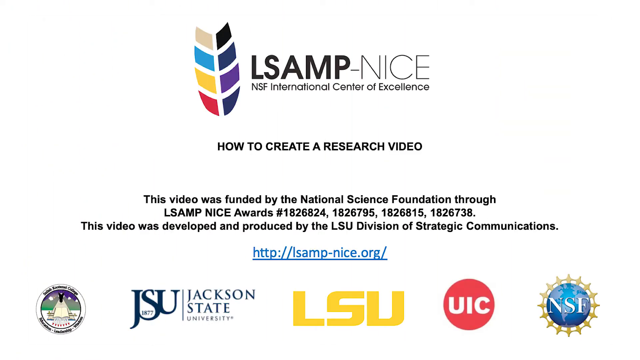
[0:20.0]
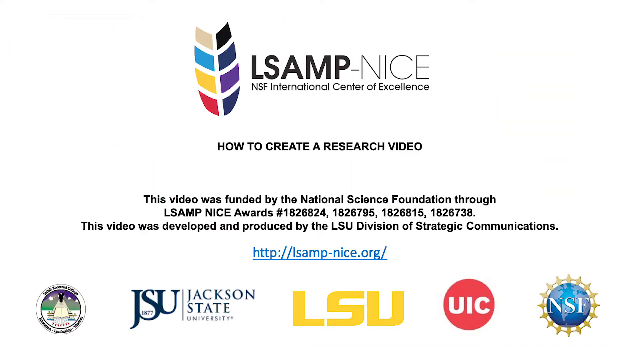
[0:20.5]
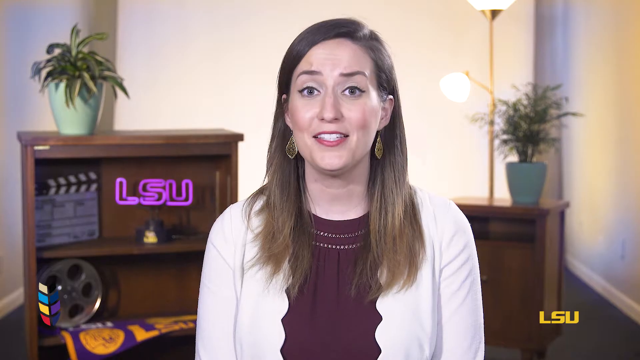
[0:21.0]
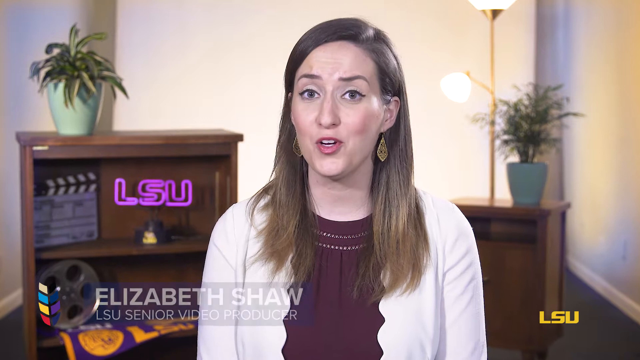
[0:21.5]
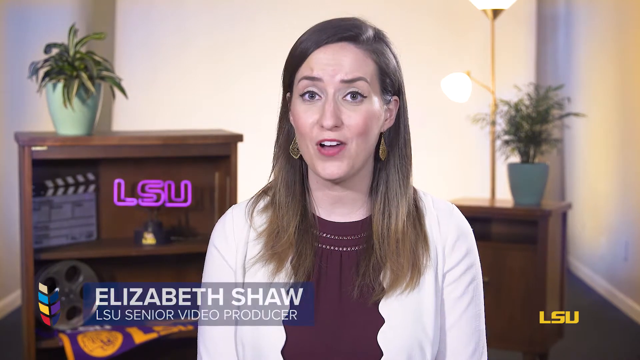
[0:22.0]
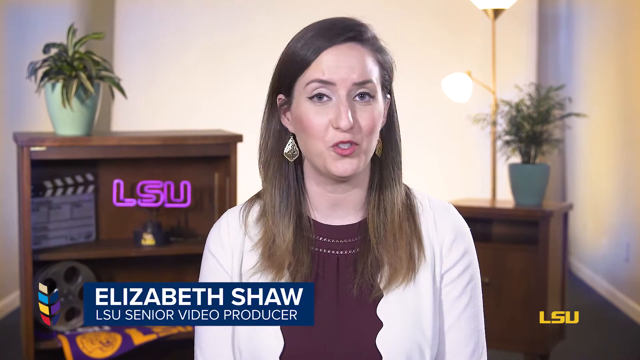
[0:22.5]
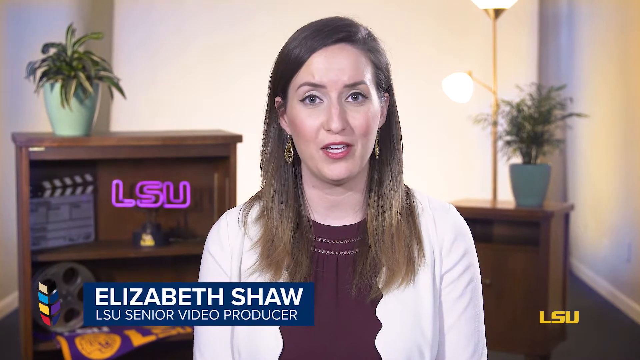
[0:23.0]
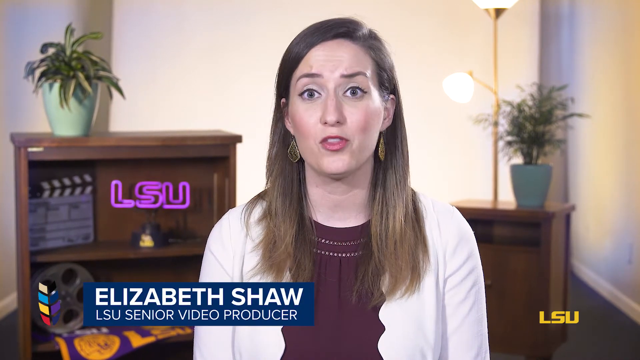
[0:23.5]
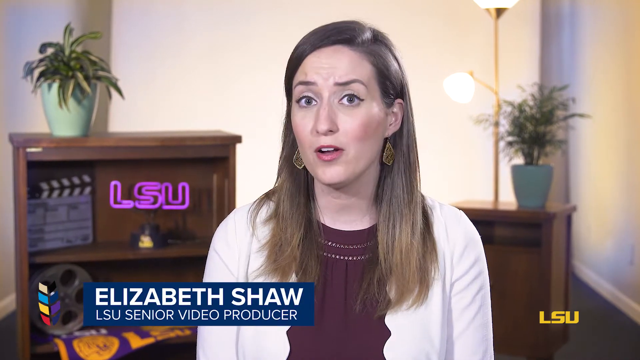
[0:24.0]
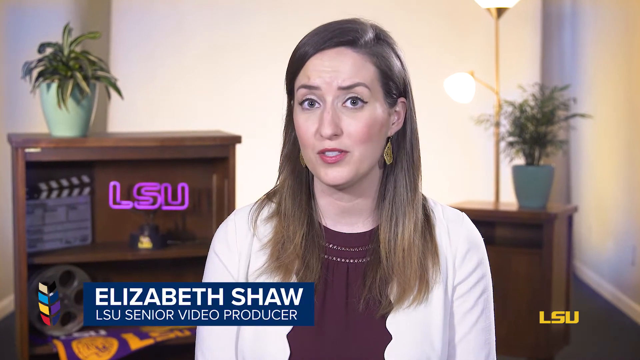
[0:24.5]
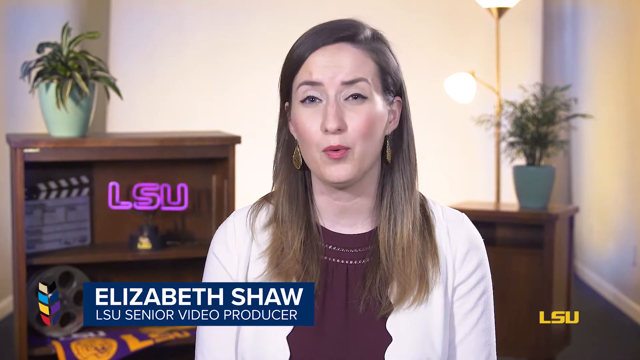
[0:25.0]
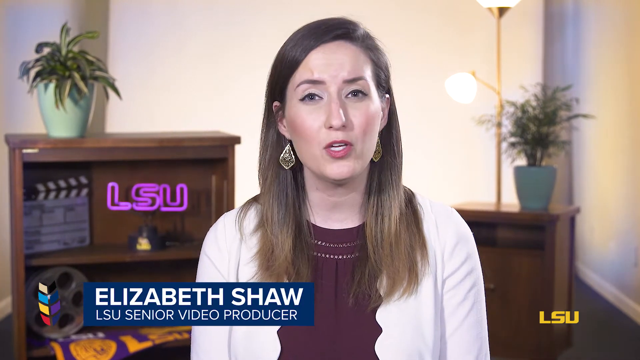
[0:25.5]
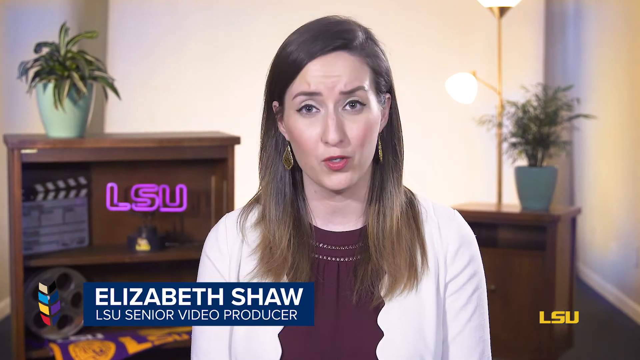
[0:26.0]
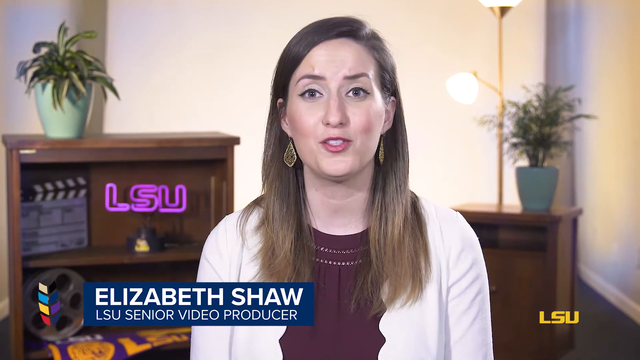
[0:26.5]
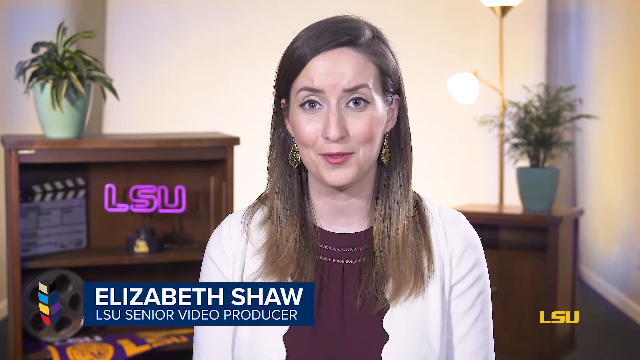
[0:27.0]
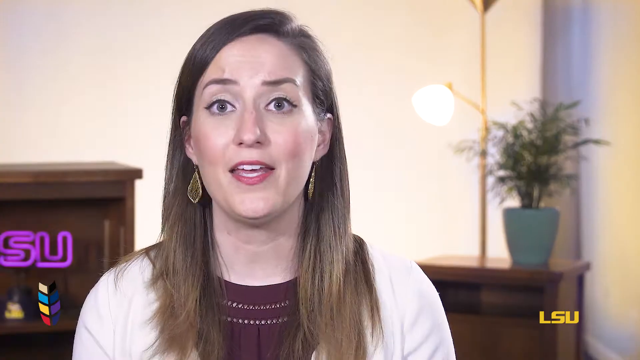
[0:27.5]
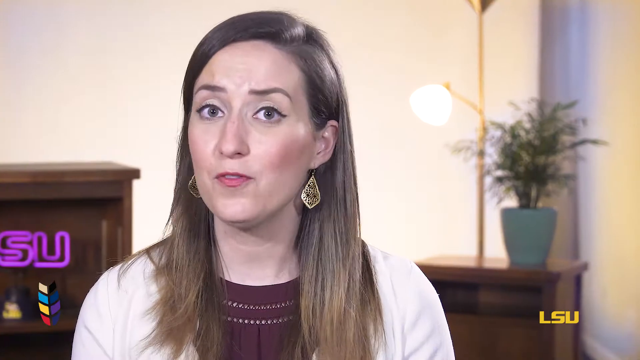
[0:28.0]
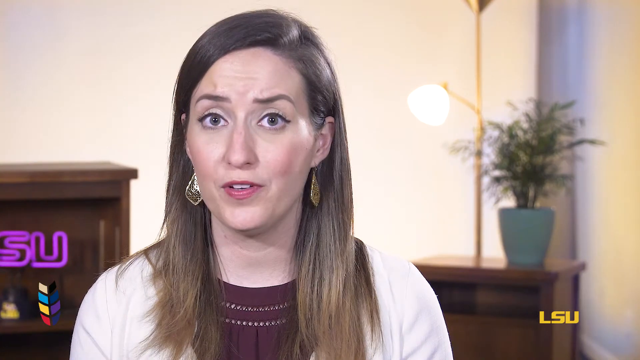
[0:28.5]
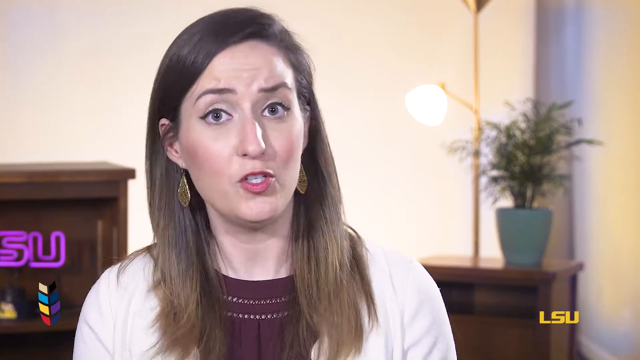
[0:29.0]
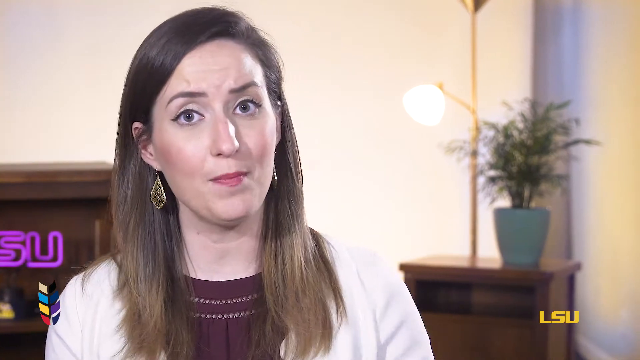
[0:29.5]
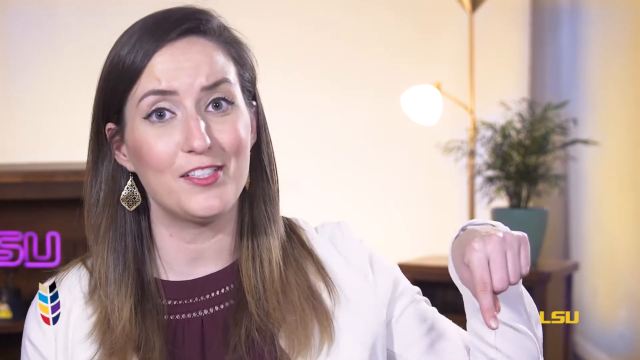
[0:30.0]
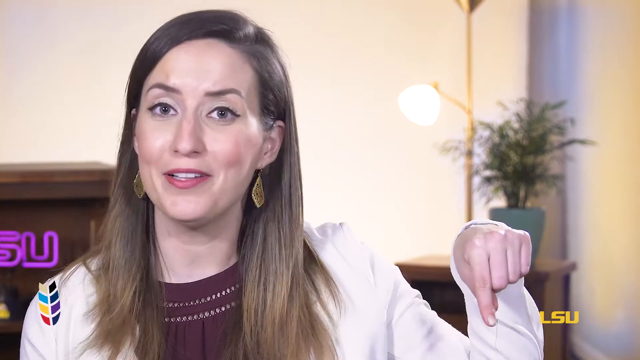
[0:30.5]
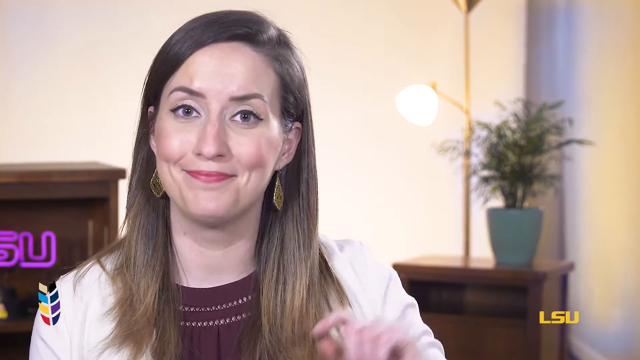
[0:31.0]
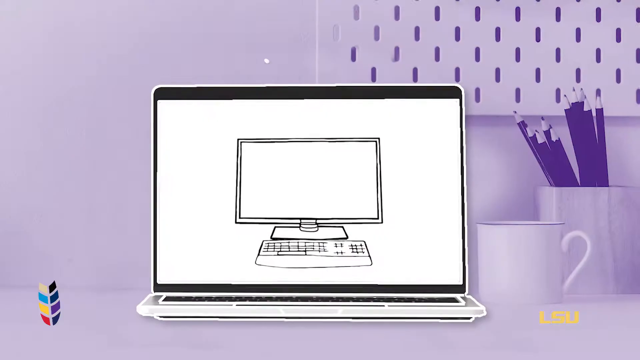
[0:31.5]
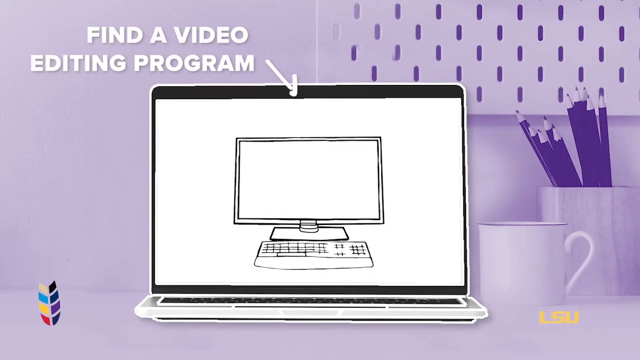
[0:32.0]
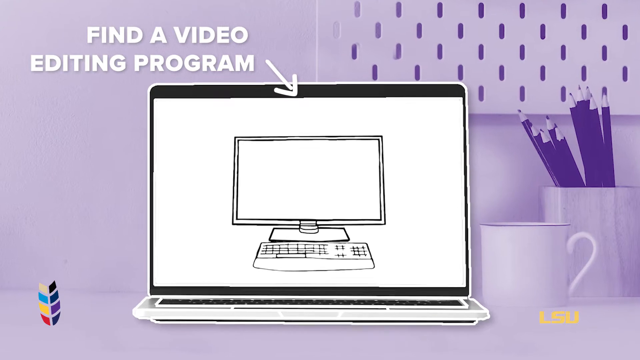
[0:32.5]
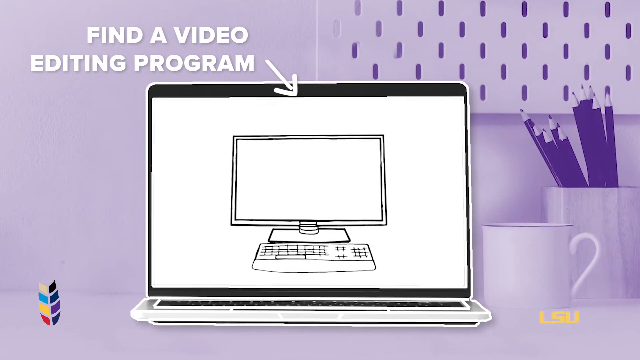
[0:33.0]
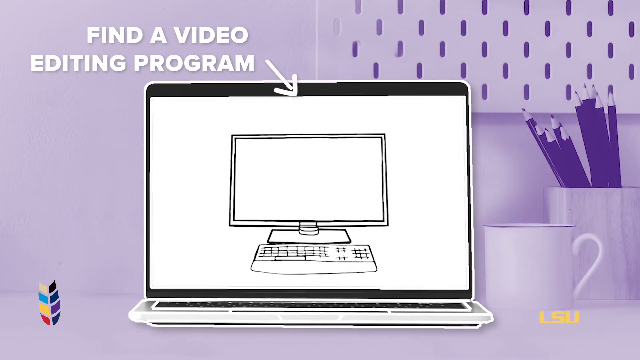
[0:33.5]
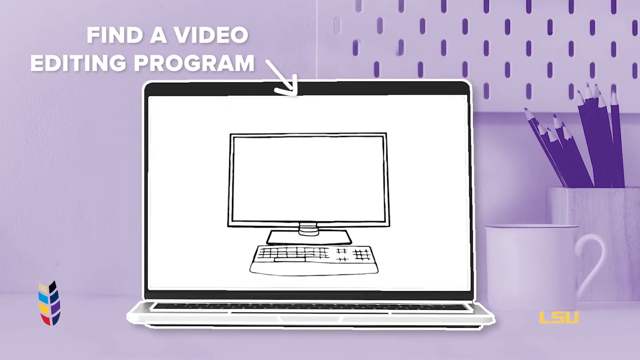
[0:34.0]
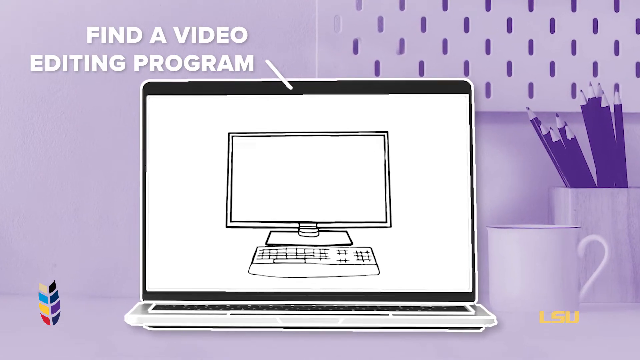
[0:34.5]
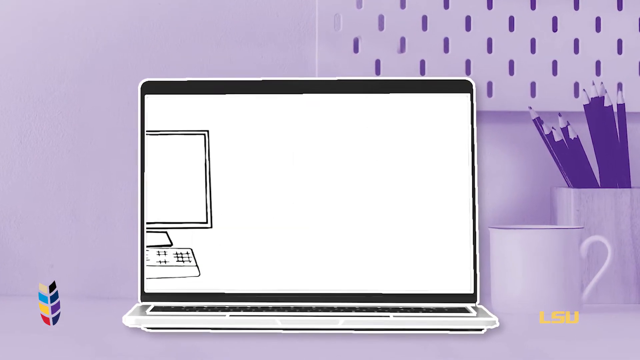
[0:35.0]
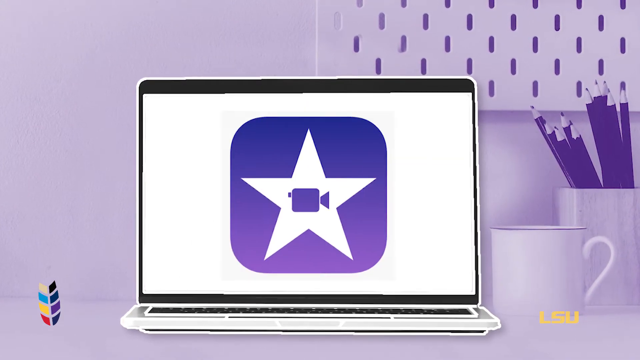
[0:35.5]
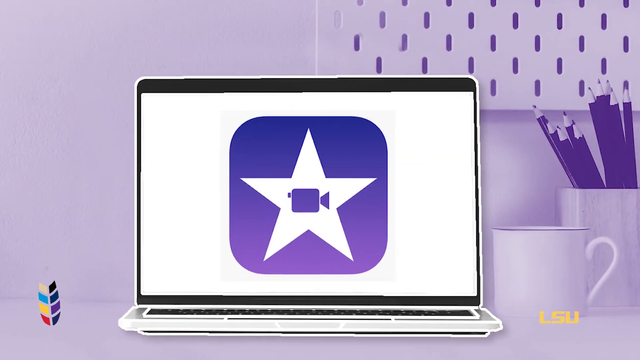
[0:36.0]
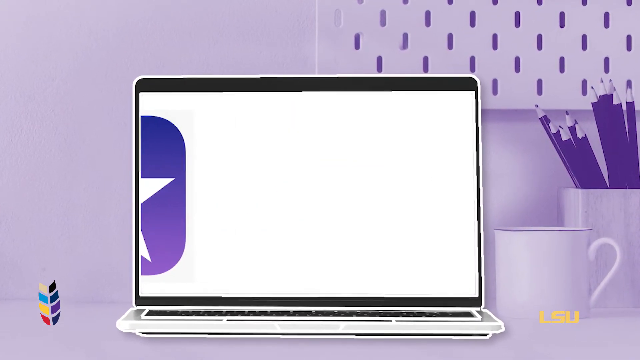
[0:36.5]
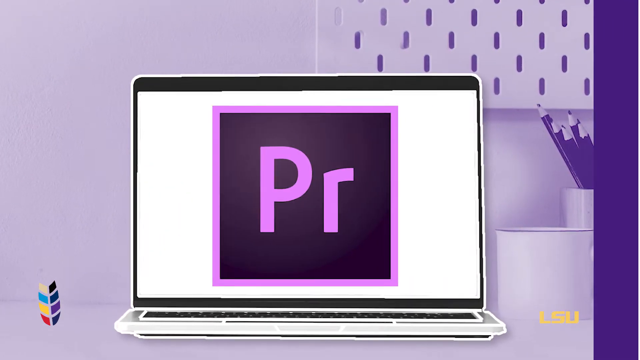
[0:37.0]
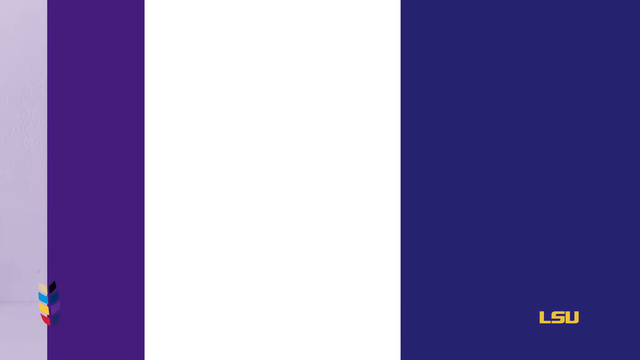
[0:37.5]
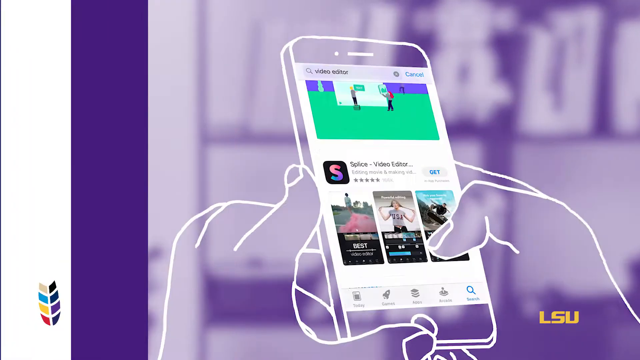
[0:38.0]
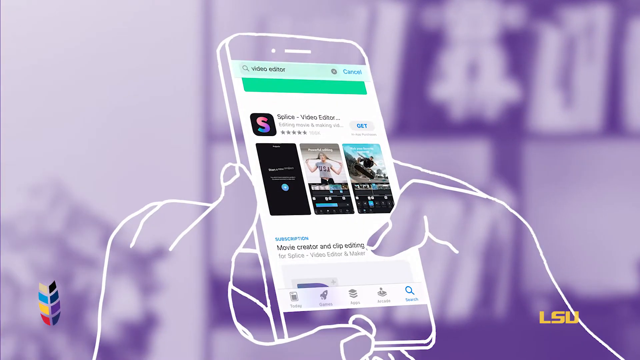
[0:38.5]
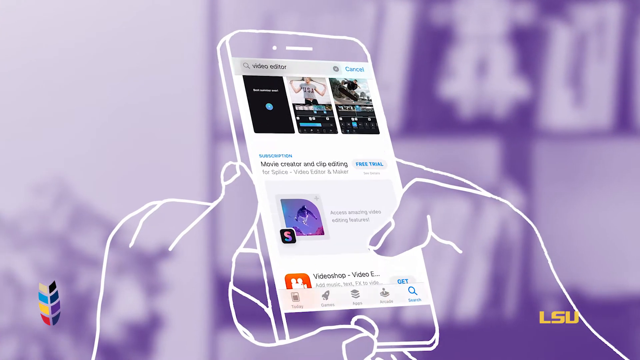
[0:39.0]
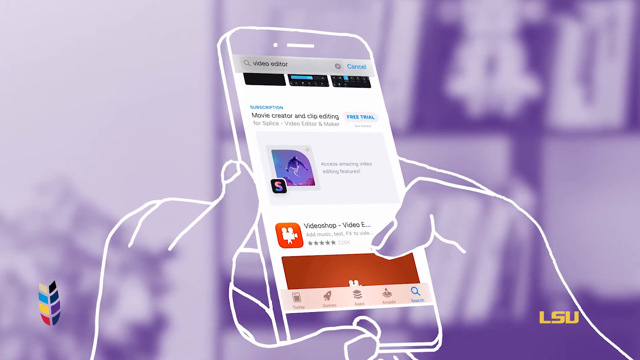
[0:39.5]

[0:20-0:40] A white woman with long brown hair, blue eyes and gold earrings, dressed in a burgundy blouse with a white cardigan, appears. The video cuts to an animation that says "find a video editing program," with different icons scrolling across a laptop screen. It then cuts to a drawing of a hand holding a cell phone and swiping through different screens, and then to a credits page. "LSAMP-NICE" is at the top, with a multicolored logo that appears to be a stylized feather. Below the logo it says "NSF International Center of Excellence," and the middle of the page says "how to create a research video" in all caps. Below that it says "this video was funded by the National Science Foundation through LSAMP-NICE awards #1826824, 1826795, 1826815, 1826738. This video was developed and produced by the LSU division of strategic communications," followed by the URL "http://lsamp-nice.org/". At the bottom of the screen are logos of different institutions, such as Jackson State University, LSU, UIC and NSF.